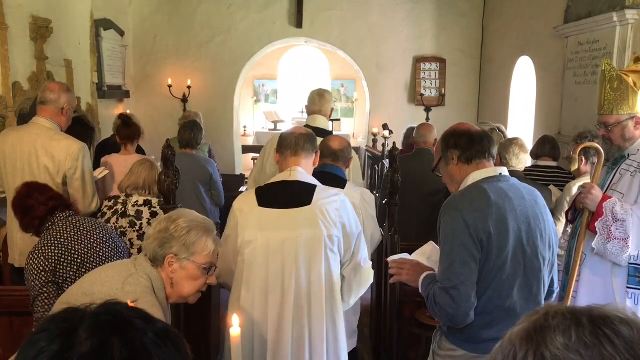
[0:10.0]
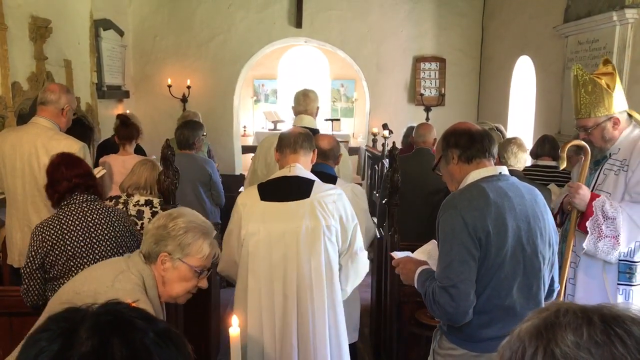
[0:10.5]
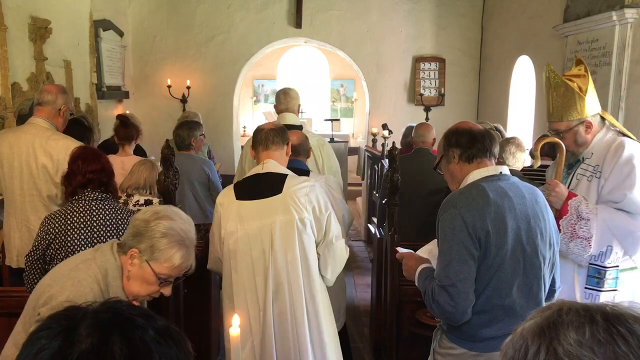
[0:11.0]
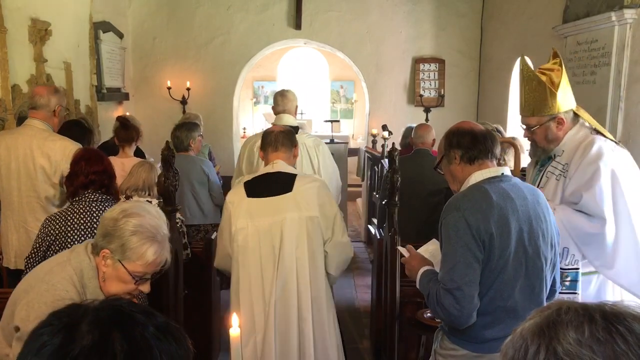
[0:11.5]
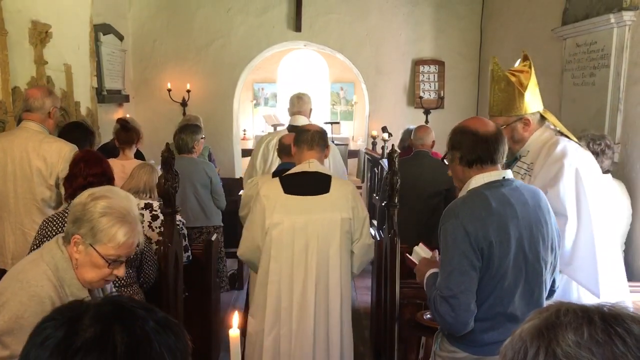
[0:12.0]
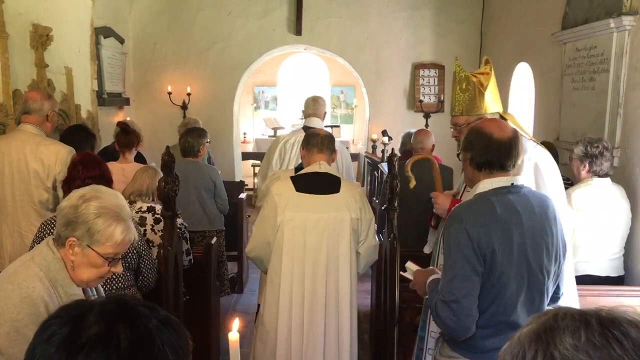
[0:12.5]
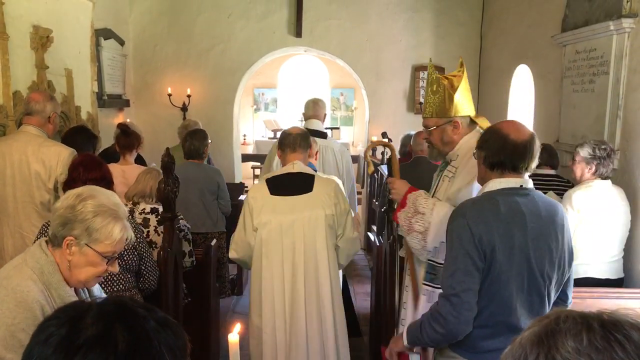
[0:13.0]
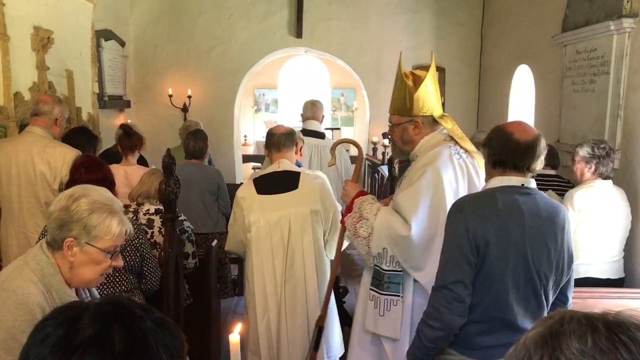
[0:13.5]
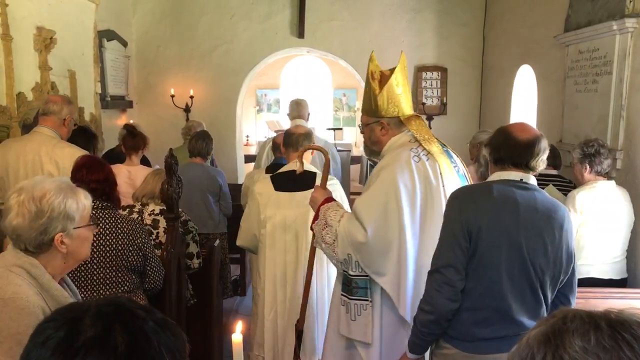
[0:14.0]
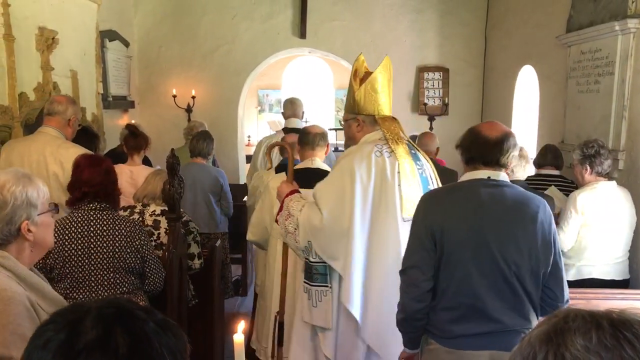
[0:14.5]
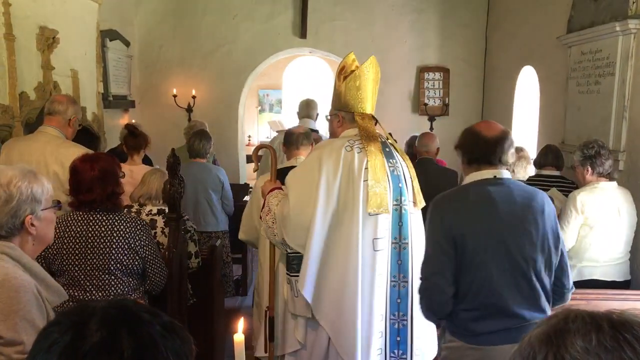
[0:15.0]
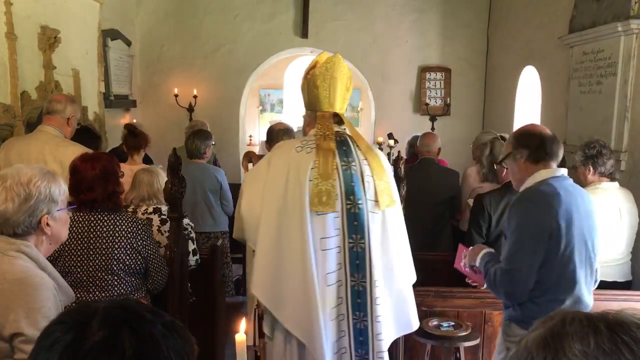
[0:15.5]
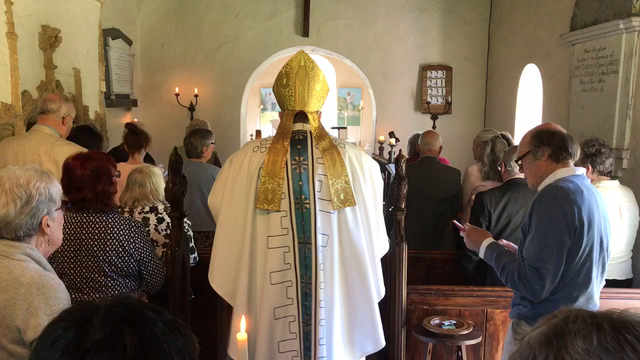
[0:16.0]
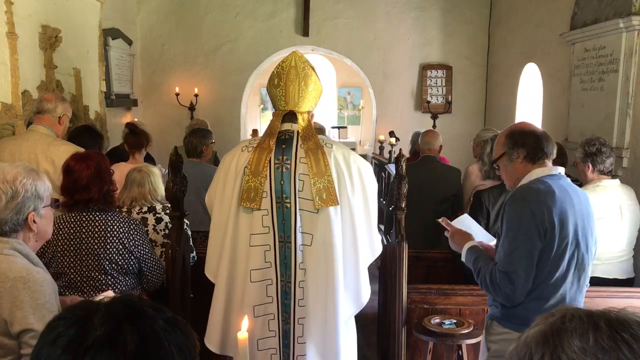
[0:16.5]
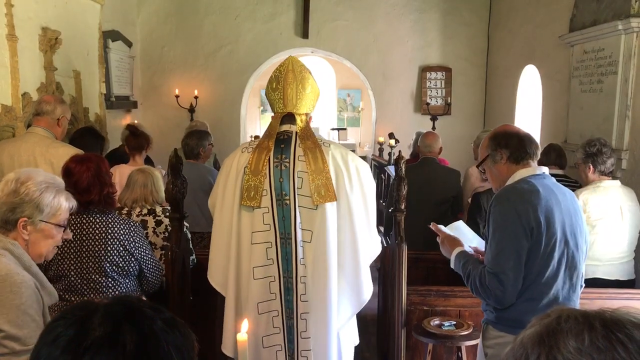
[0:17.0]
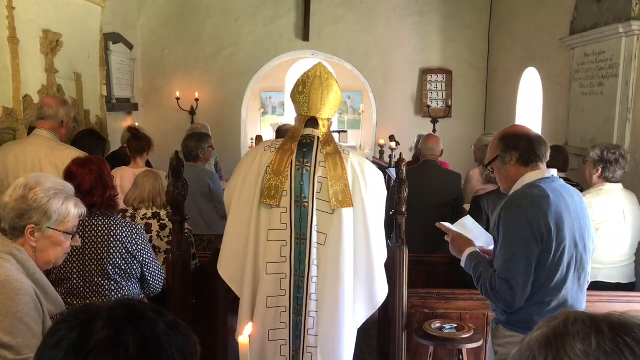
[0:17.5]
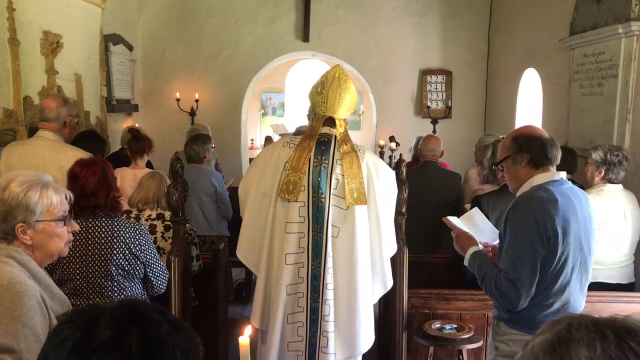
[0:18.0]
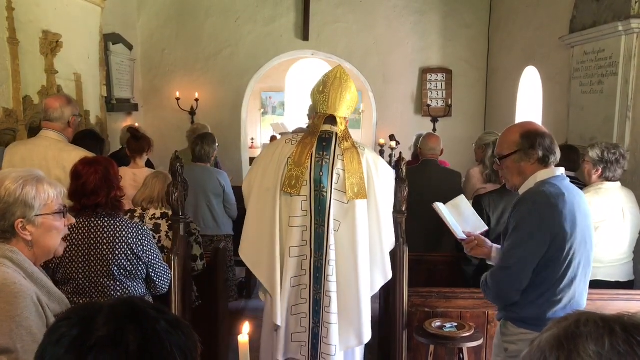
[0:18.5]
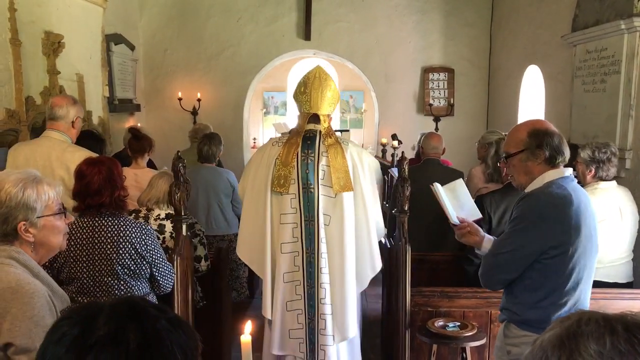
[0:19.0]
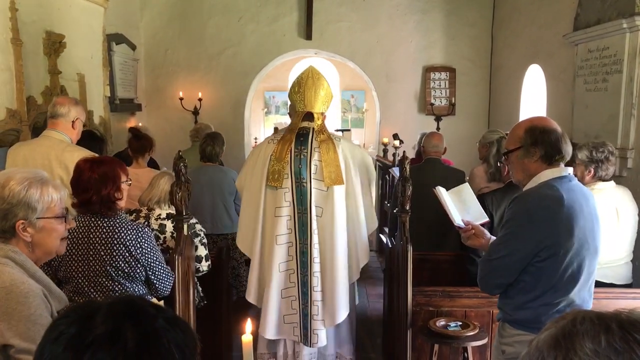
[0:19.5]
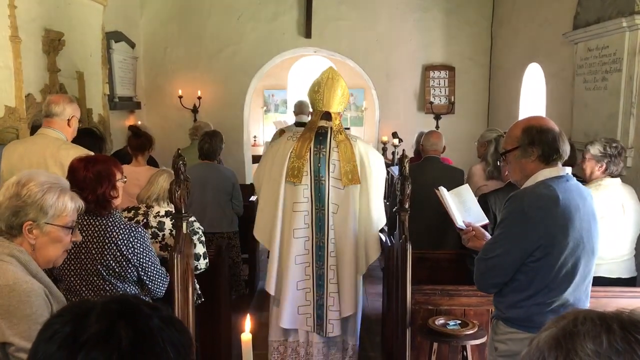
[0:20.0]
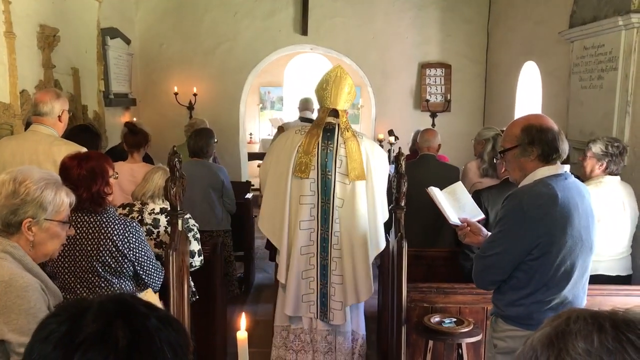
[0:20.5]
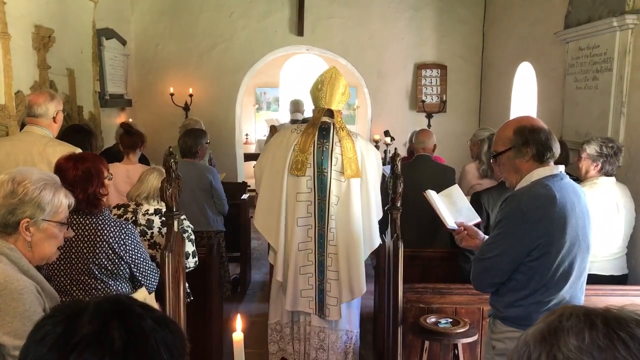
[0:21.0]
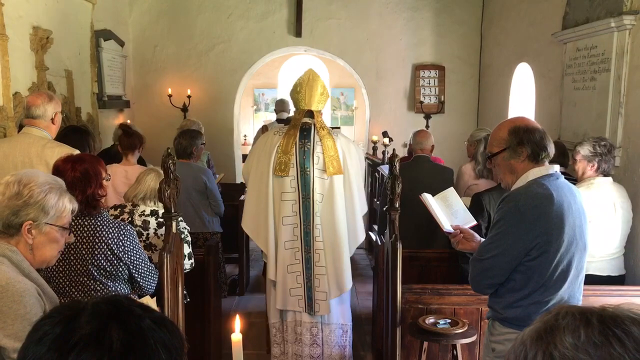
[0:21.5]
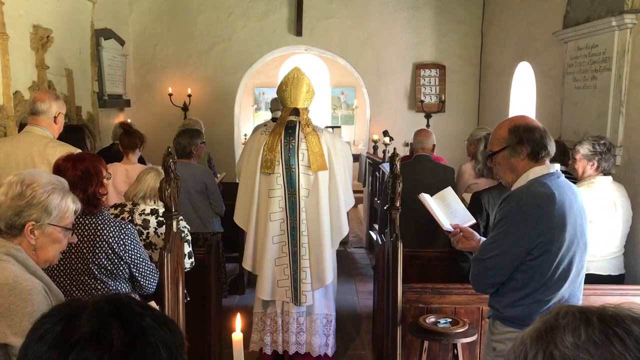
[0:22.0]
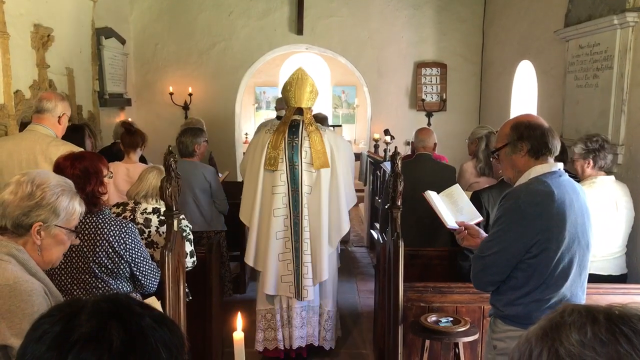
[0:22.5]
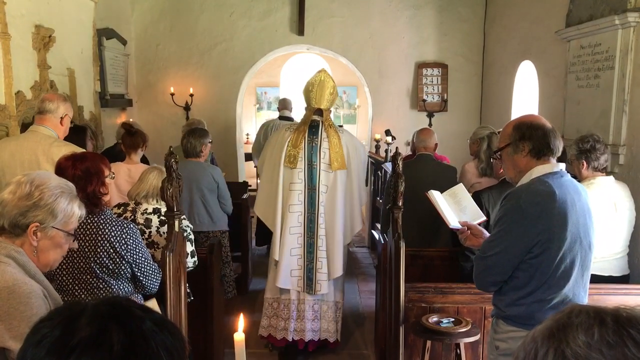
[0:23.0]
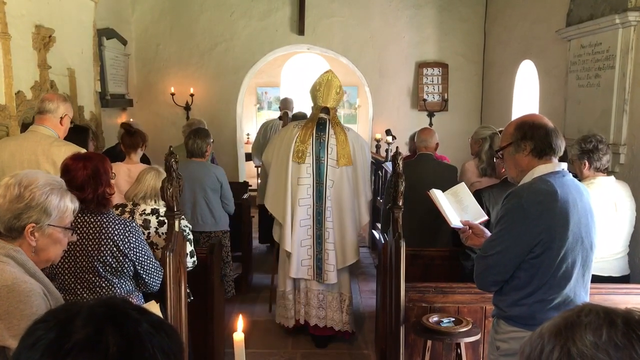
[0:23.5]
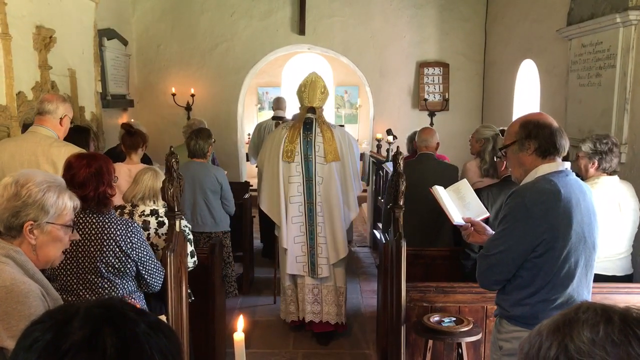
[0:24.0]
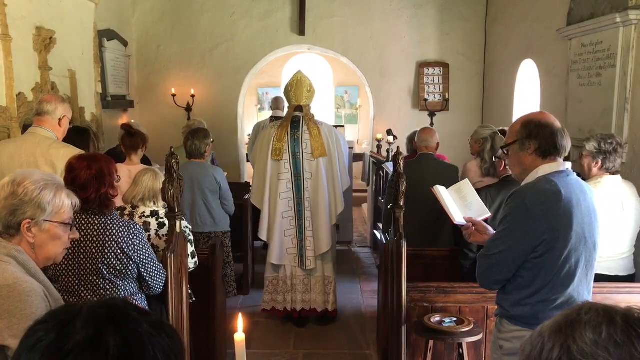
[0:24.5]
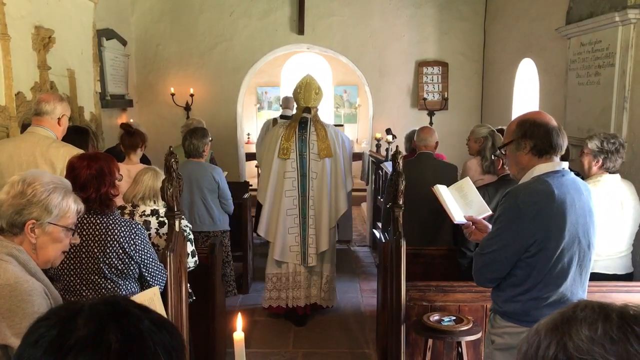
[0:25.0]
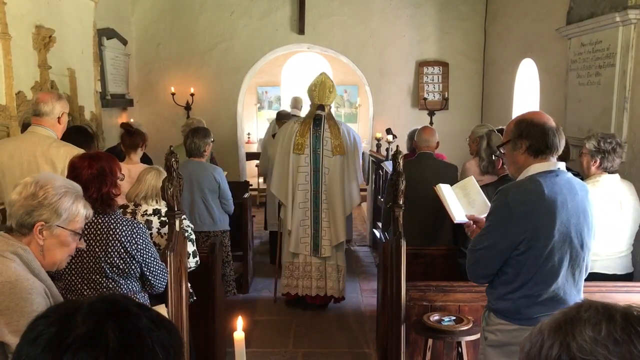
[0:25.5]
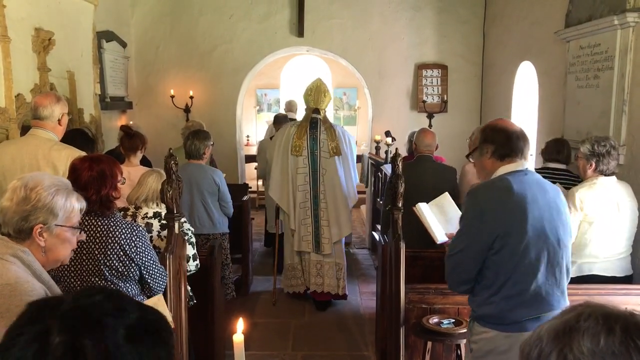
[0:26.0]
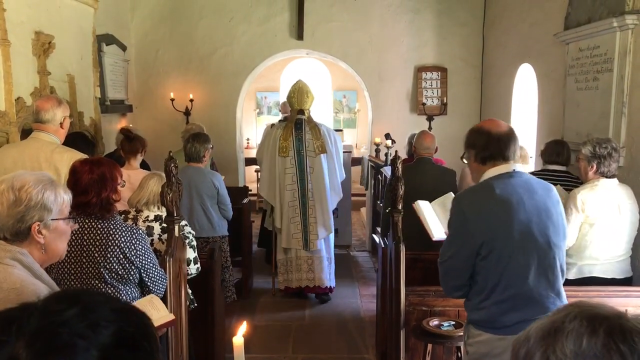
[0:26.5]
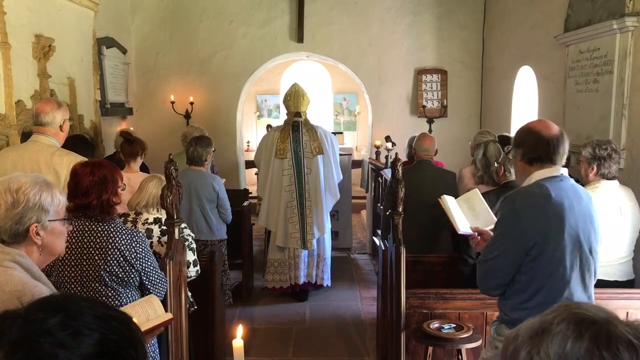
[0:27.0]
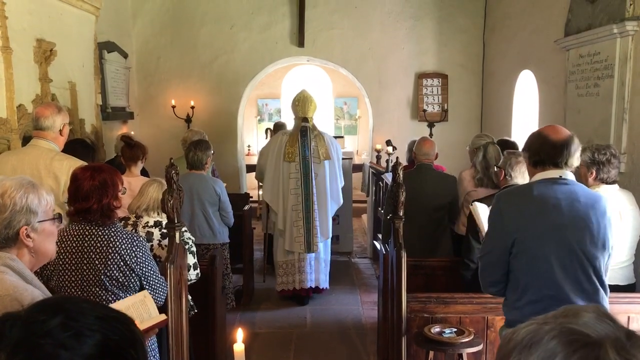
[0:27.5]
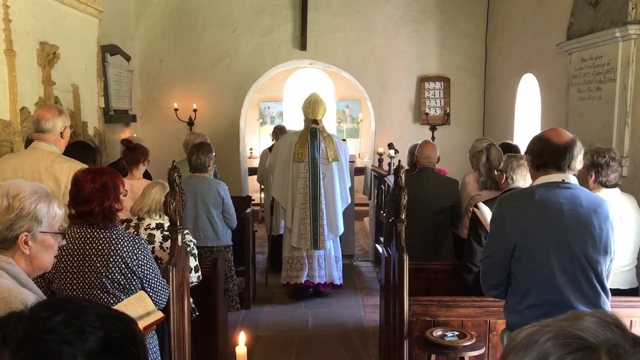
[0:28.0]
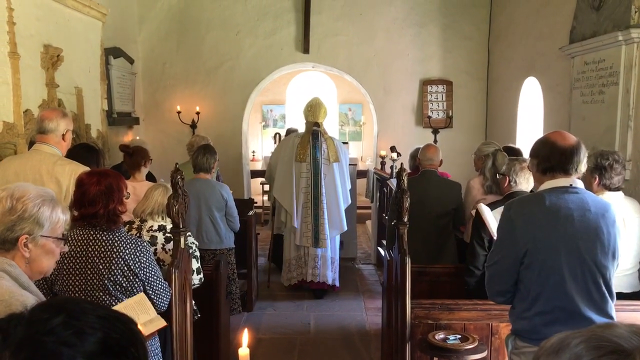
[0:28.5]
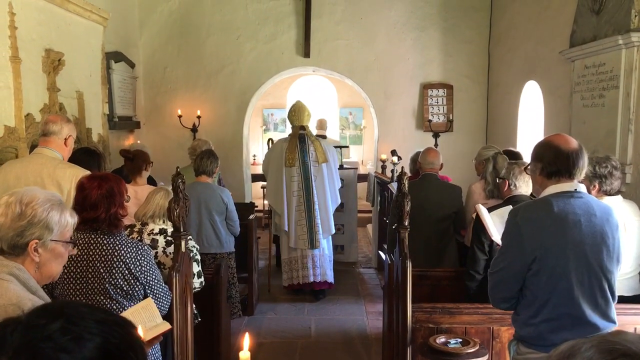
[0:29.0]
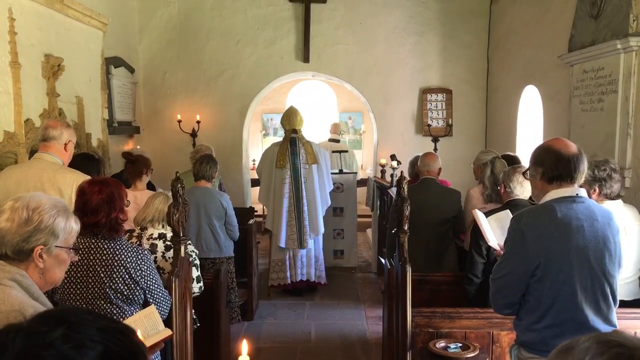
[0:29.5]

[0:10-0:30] Three of the men in robes walk to the front of the church, away from the camera; their robes are white, with black clothes underneath. The fourth man in robes then comes through, and he looks like he may be a bishop. He has a staff or a crook to walk with and a gold-coloured hat, and his white robes are much more plush than the other men's, with some blue running down the centre and some embroidery. Underneath that he wears another robe with some detailing on the bottom, and beneath that he appears to be wearing some sort of red, burgundy-coloured clothes. The people in the congregation notice him. A man wearing glasses steps out of his way, holding what appears to be either a Bible or a hymn book. A woman on the left side of the screen, also wearing glasses, holds either a hymn book or a Bible as well. They all look like they are getting ready for the ceremony.